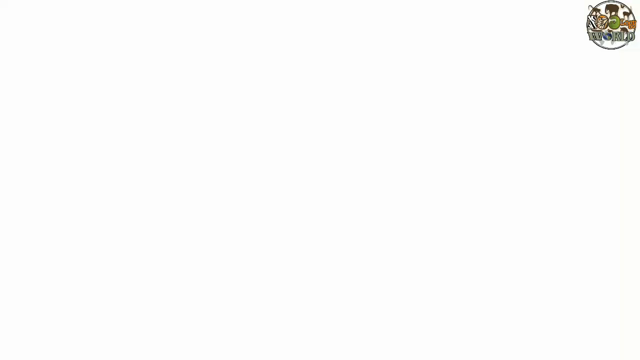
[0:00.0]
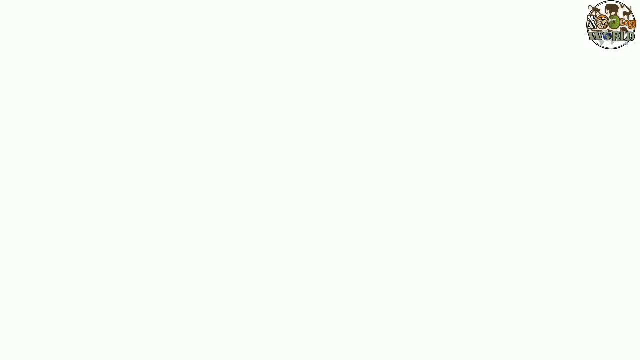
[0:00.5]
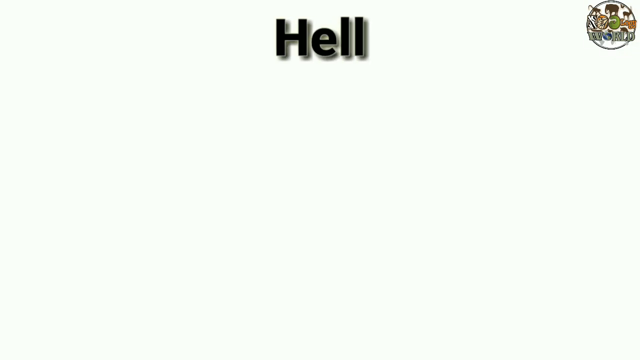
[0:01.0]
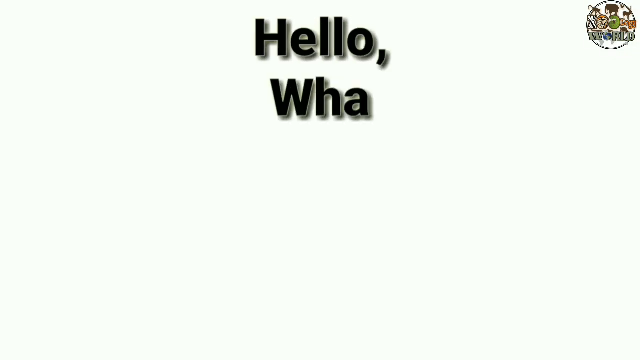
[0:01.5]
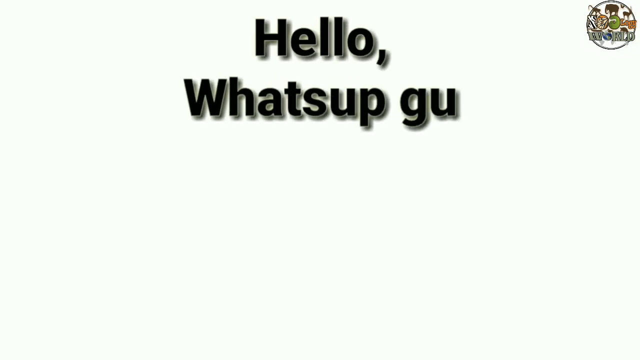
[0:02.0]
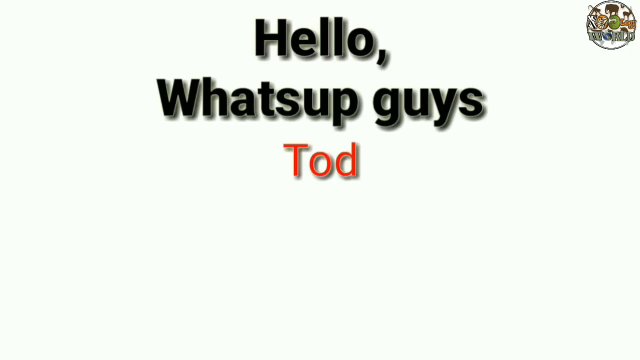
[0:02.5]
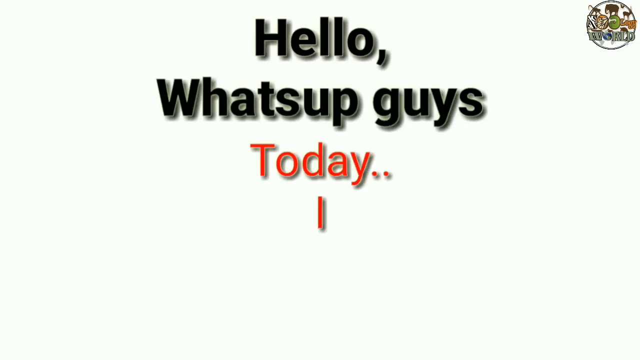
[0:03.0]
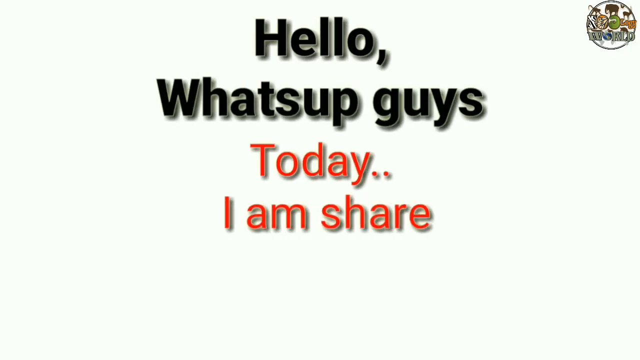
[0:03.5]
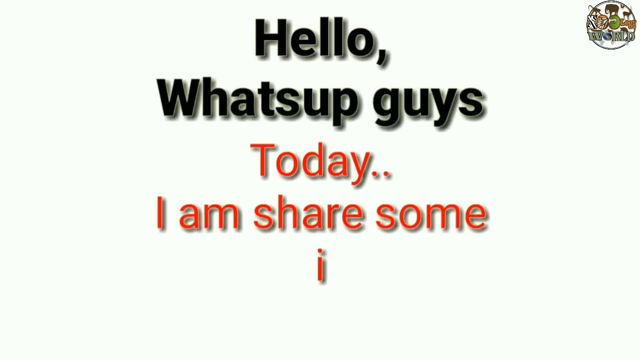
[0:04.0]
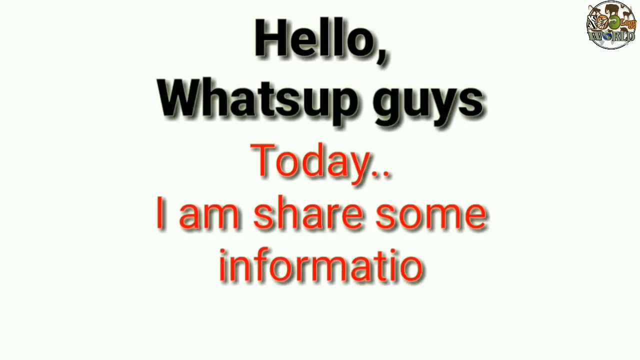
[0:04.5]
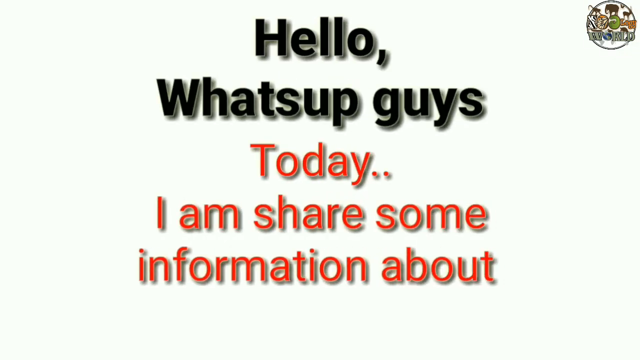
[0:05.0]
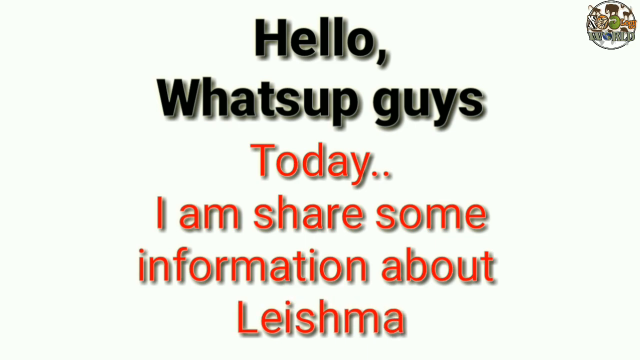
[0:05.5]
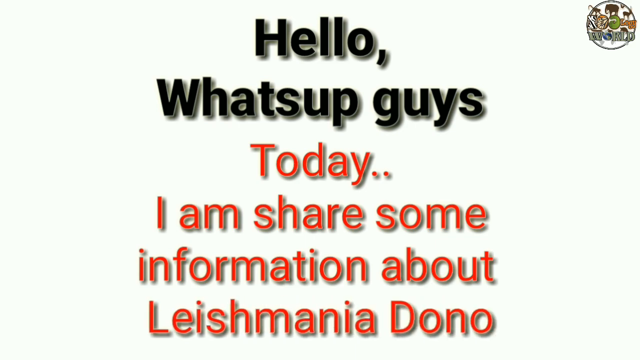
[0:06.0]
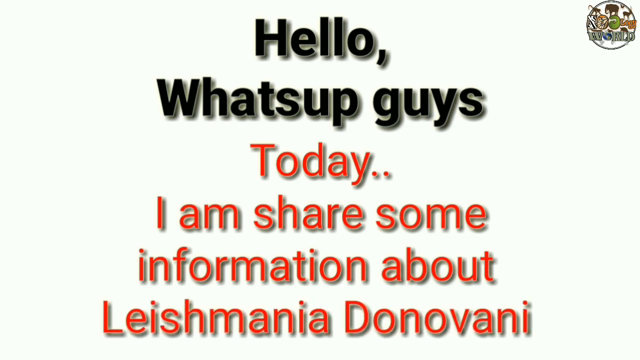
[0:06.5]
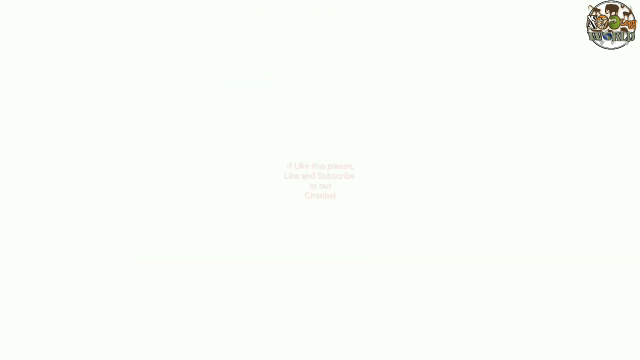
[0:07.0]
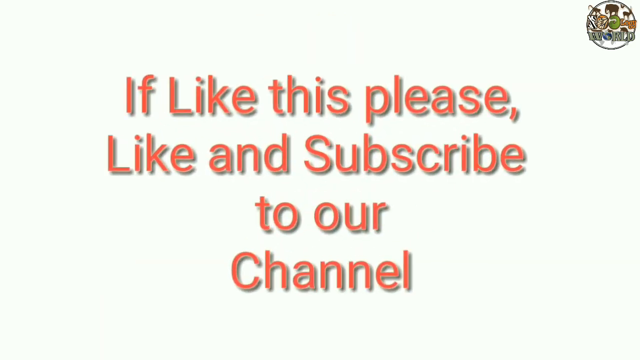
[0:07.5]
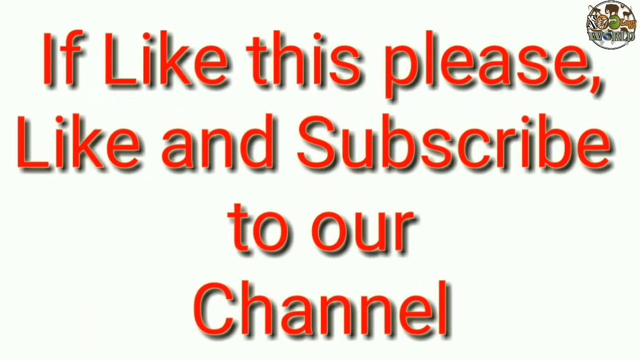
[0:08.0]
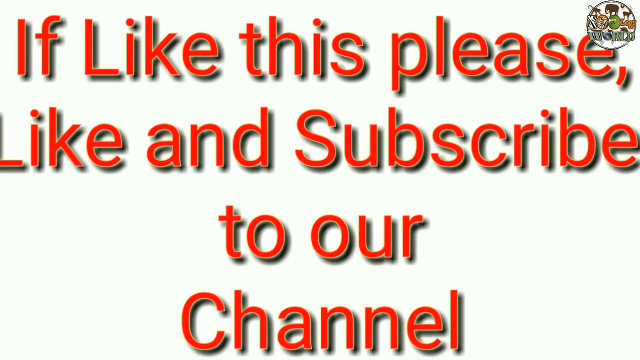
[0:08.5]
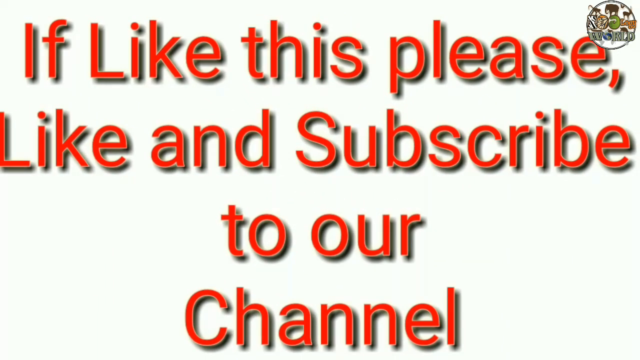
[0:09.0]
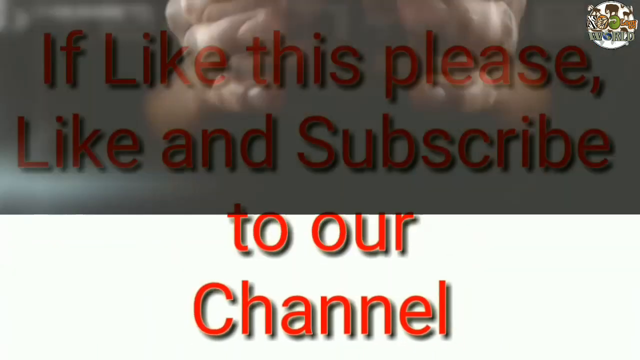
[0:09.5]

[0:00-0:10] The video opens on a white background with a logo in the top right containing different animals. One by one, words and sentences appear, reading "Hello, what's up guys, today I am share some information about the Leishmania Donovani." Those sentences disappear, and new words in orange slowly transition onto the screen: "if like this please, like and subscribe to our channel." The words come really close to the screen and then push back, and as they do, a new scene appears. In it, a person opens the left hand and the right hand, with a logo in the middle reading "Zoology World" with animals inside it. There is a red circle around the logo.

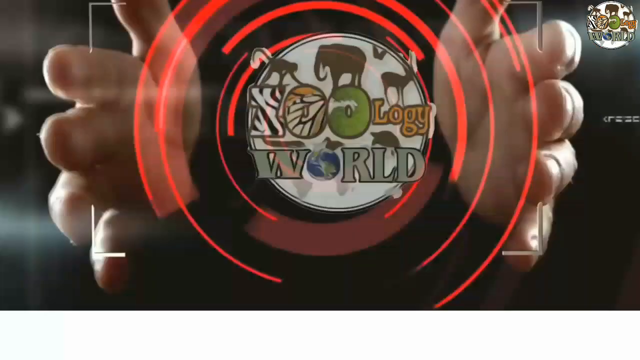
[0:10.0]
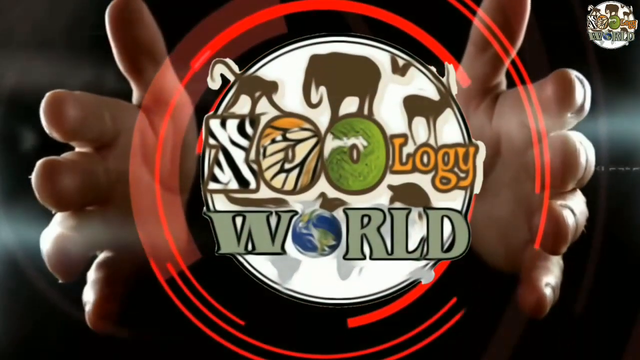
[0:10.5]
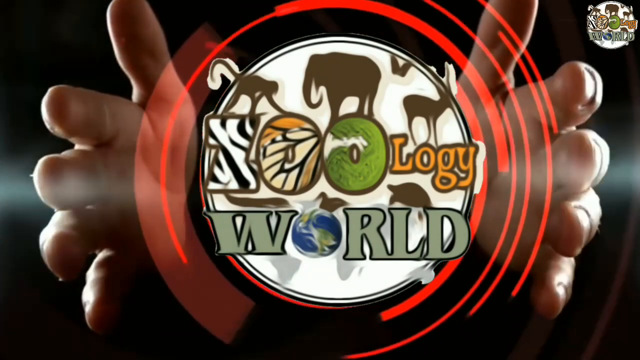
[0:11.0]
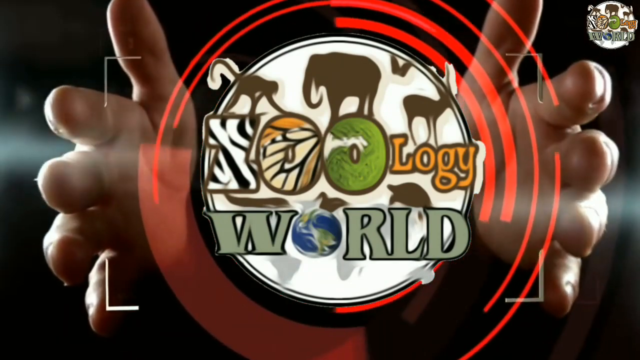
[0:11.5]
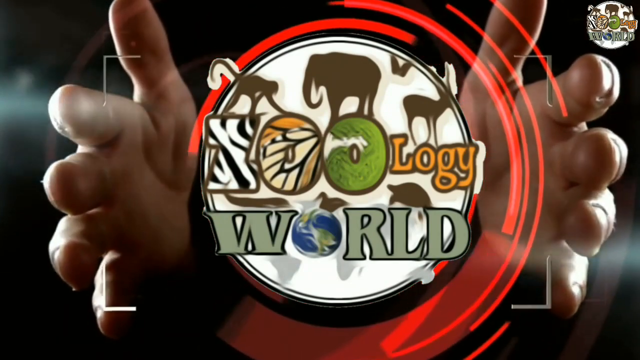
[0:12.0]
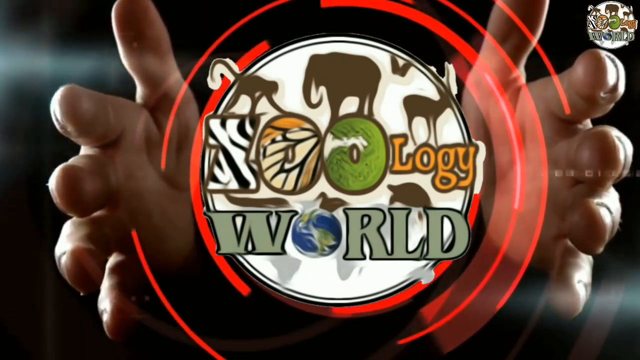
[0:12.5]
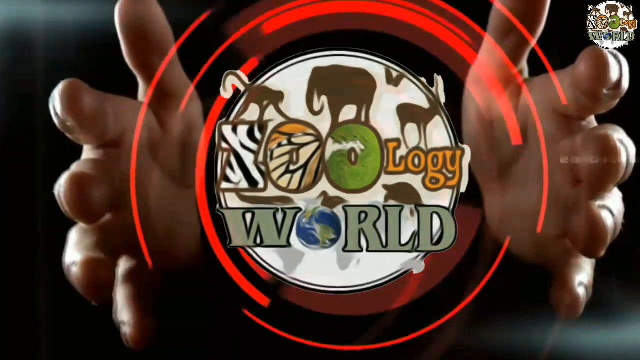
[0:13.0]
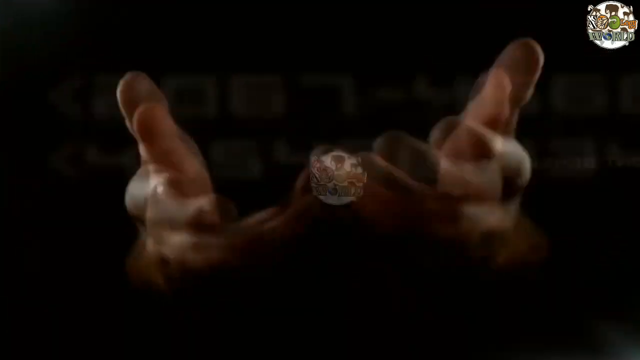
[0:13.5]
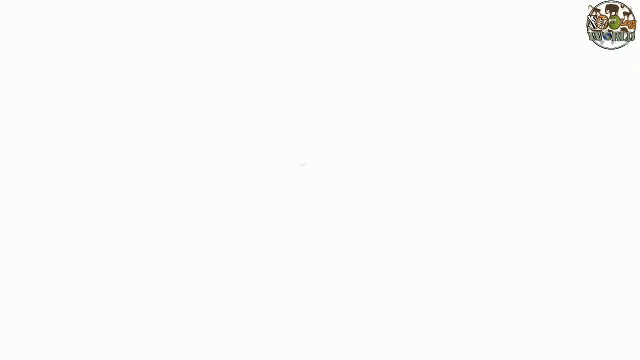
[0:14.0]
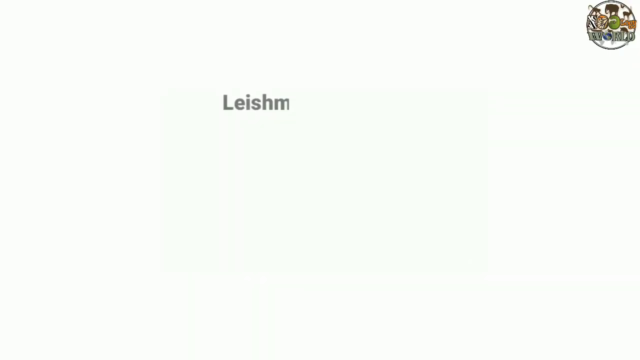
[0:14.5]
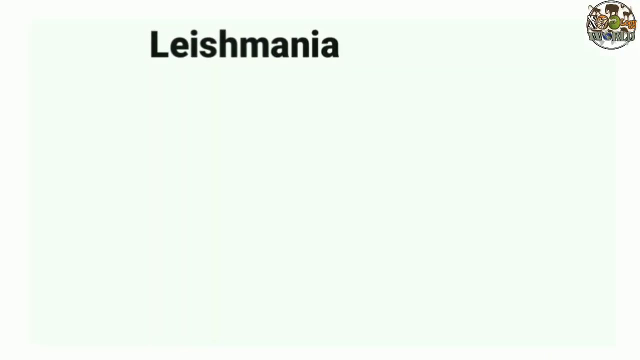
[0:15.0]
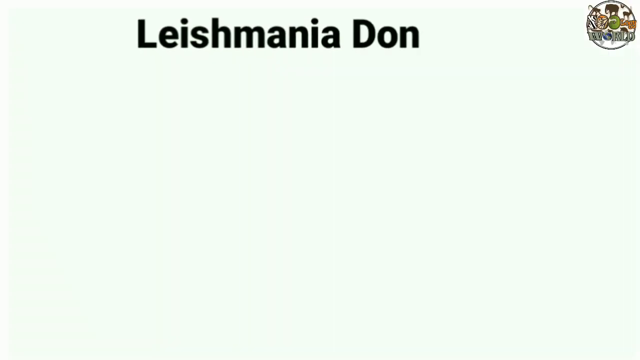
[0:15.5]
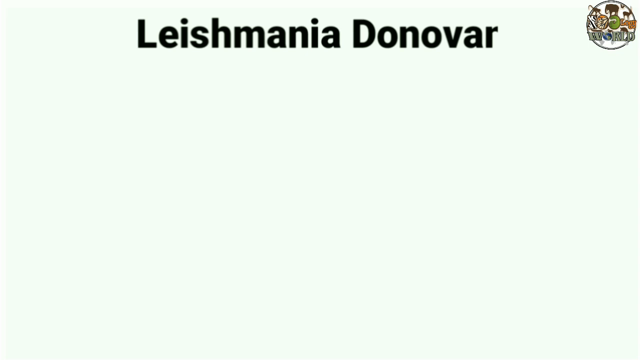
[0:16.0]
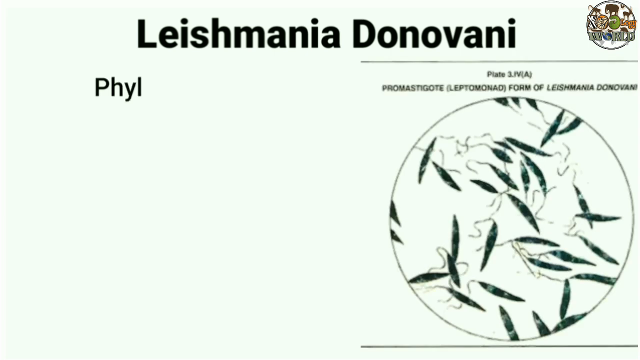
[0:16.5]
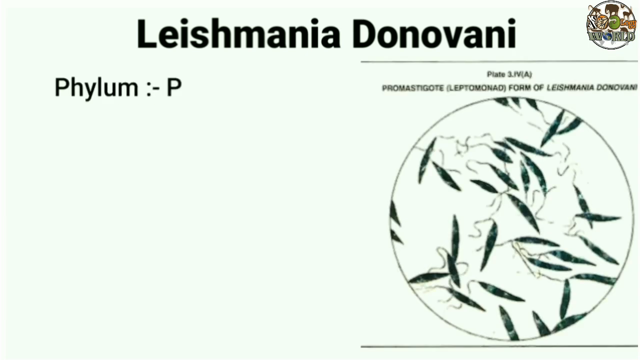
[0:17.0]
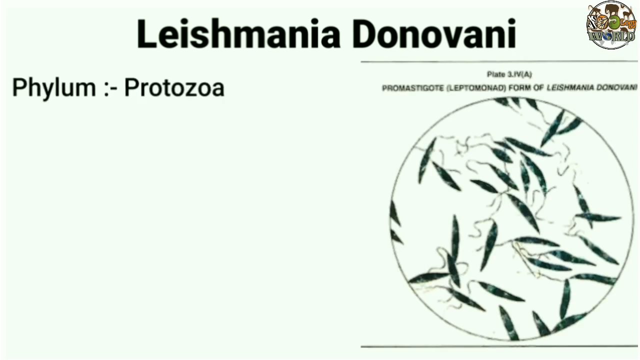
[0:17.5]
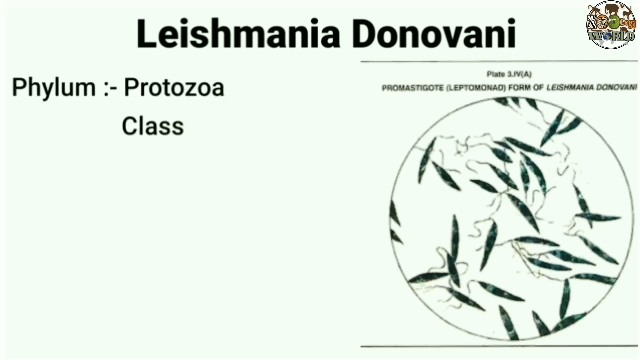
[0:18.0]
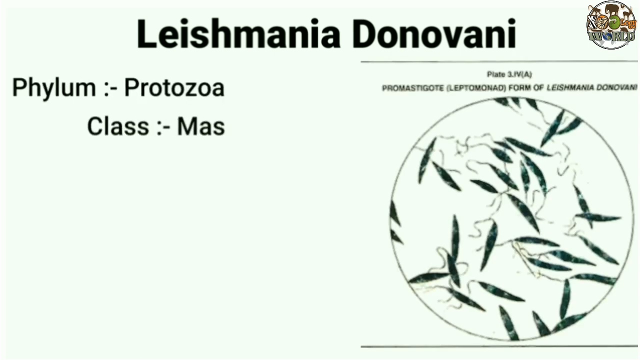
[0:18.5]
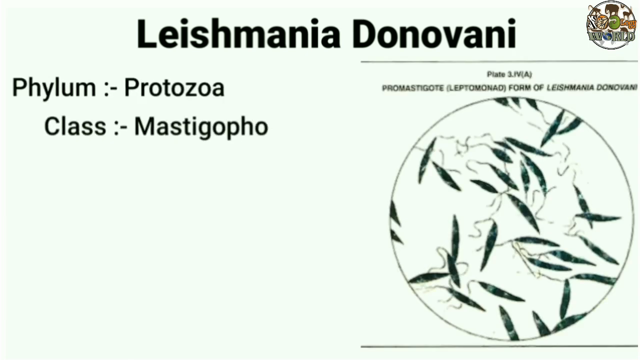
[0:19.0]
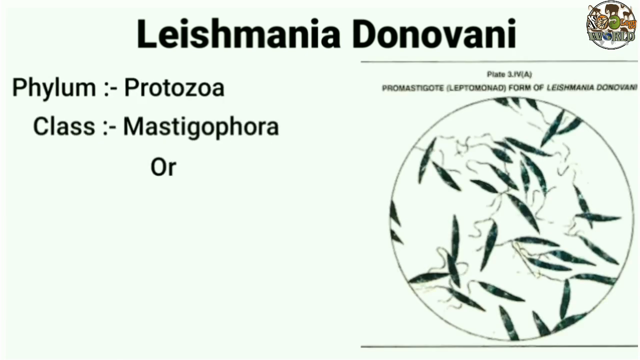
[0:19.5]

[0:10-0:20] Hands hover on the left and right sides, with a logo containing animals and the earth in the middle. Inside the logo is the name "Zoology World," and a red circle surrounds it. The logo then enters the black background, and the hands disappear into the background. The screen goes white and the words "Leishmania Donovani" appear. In the bottom right is a picture of the protozoa inside a circle, showing many of them. Then the words "phylum, protozoa" appear, followed by "class, mastigophora," and then the word "order" appears.